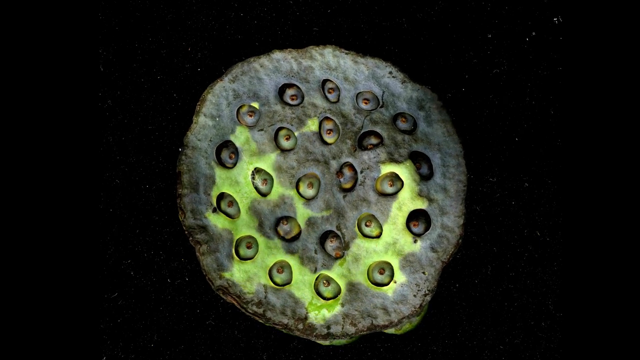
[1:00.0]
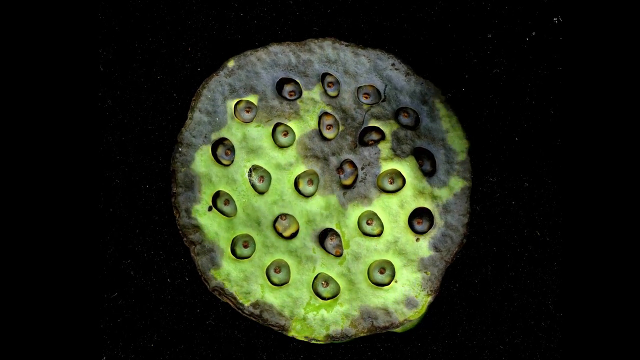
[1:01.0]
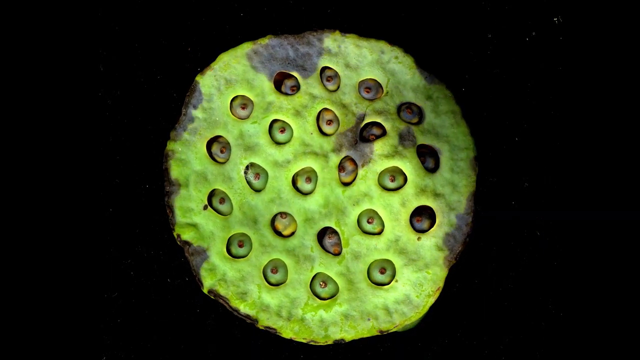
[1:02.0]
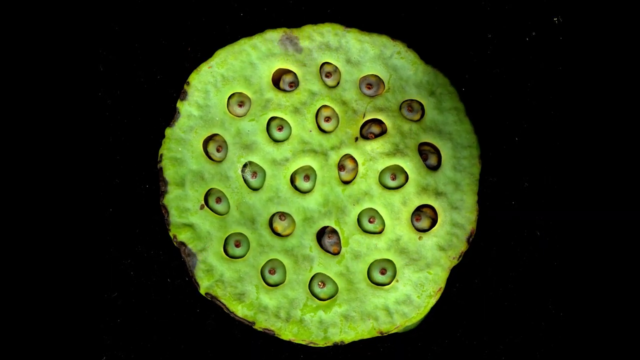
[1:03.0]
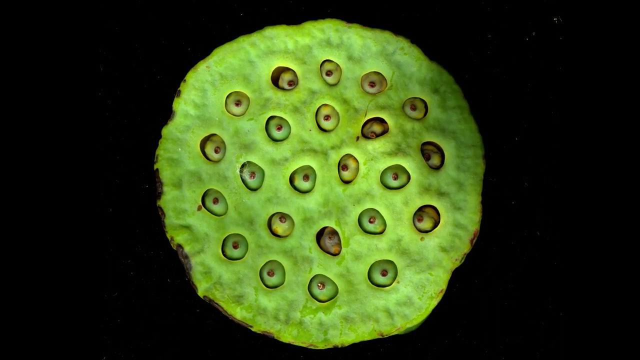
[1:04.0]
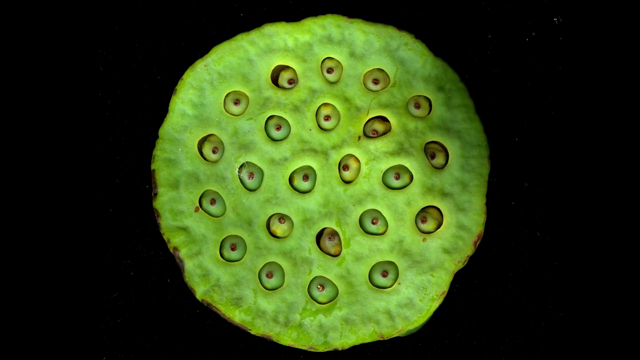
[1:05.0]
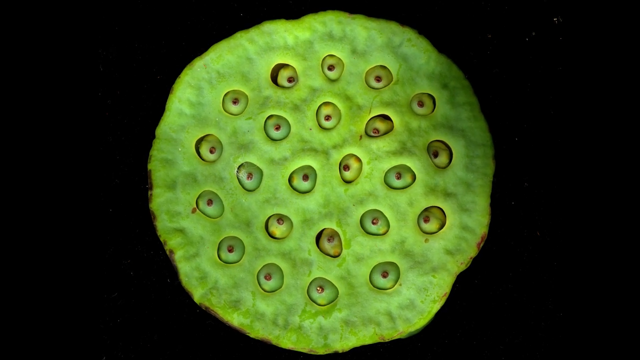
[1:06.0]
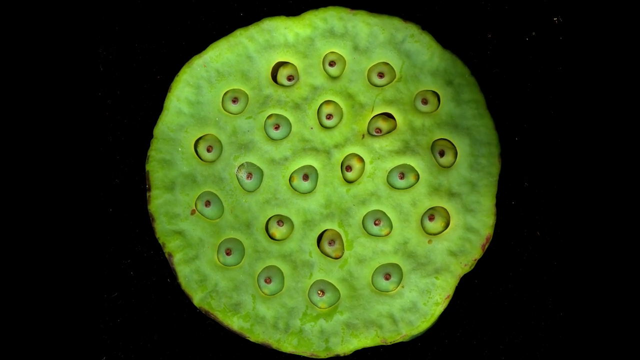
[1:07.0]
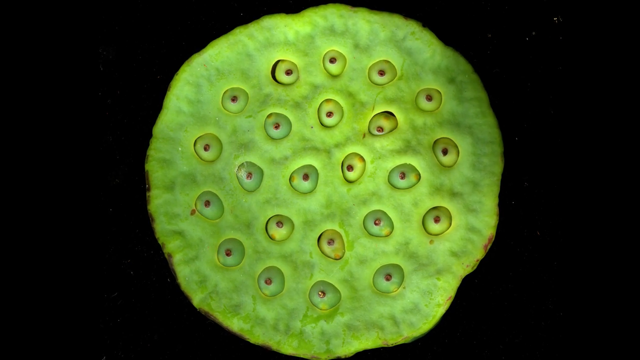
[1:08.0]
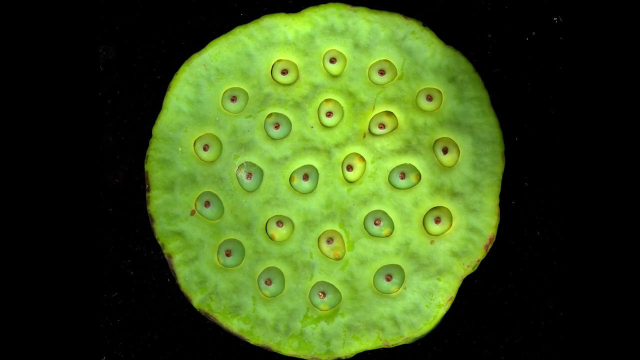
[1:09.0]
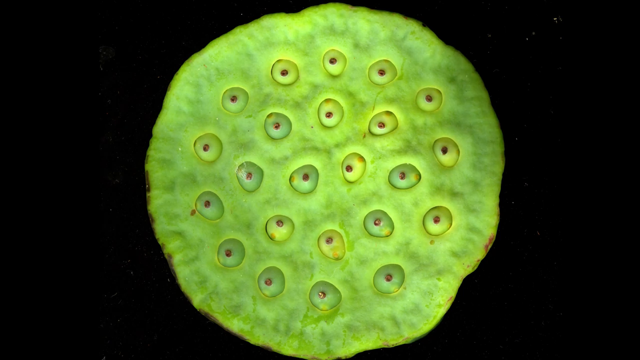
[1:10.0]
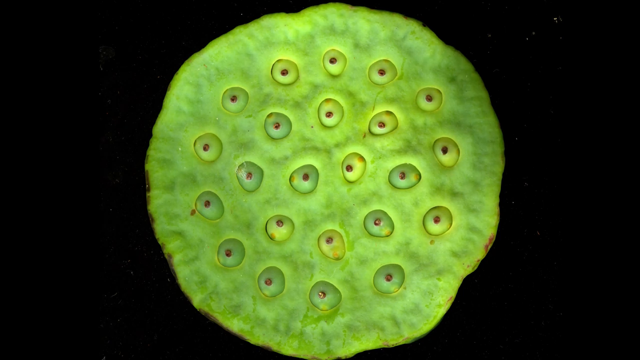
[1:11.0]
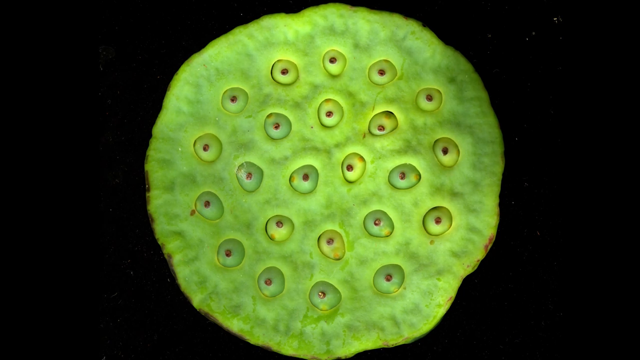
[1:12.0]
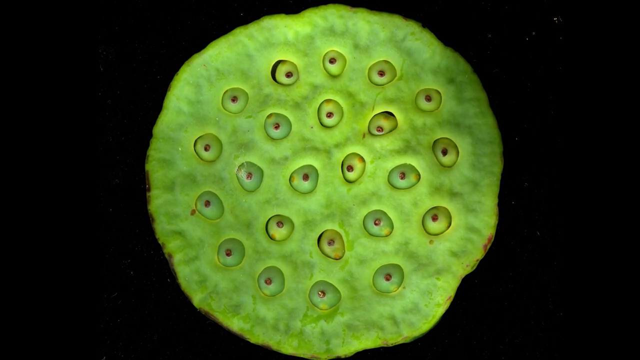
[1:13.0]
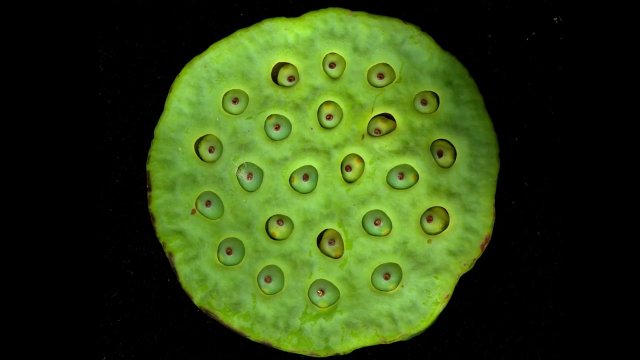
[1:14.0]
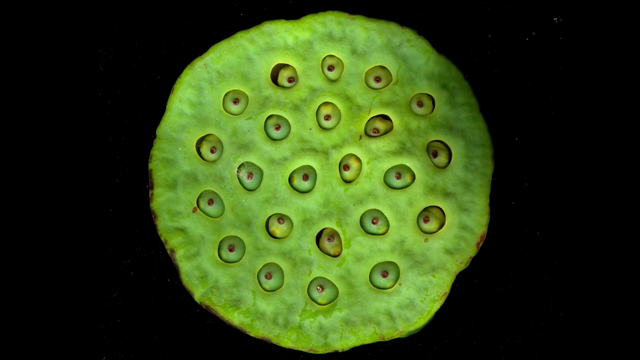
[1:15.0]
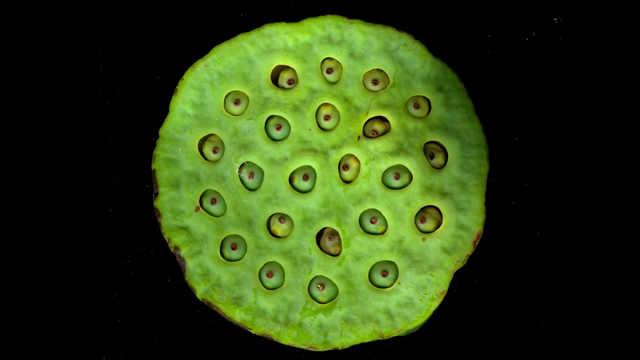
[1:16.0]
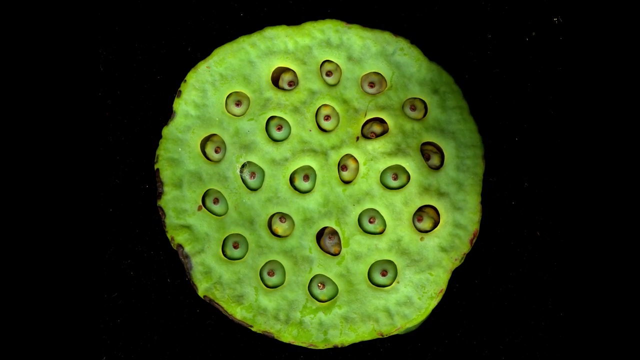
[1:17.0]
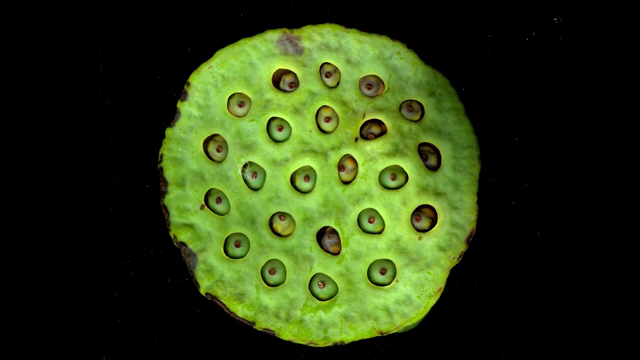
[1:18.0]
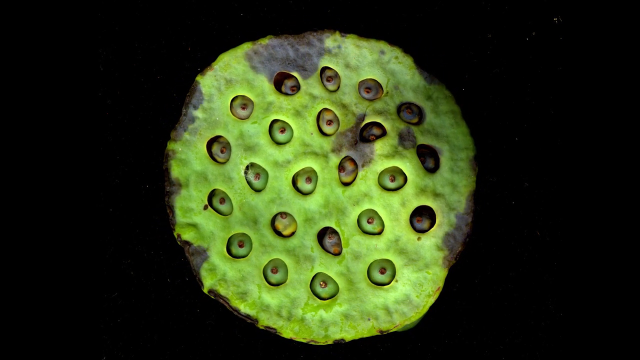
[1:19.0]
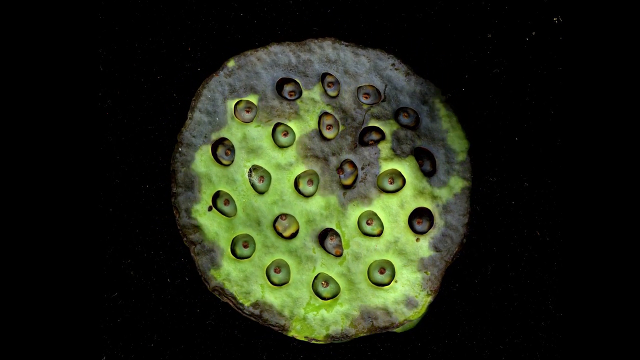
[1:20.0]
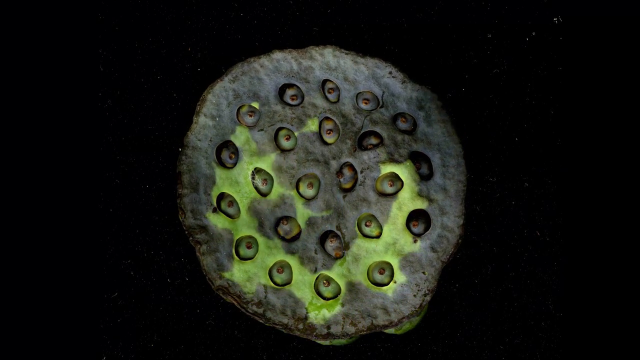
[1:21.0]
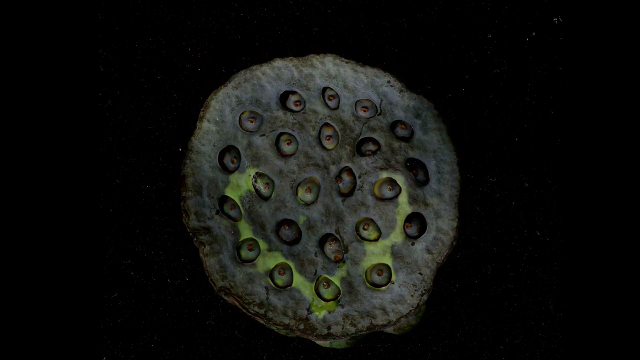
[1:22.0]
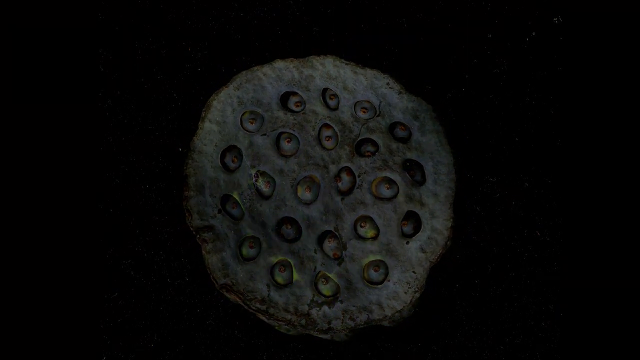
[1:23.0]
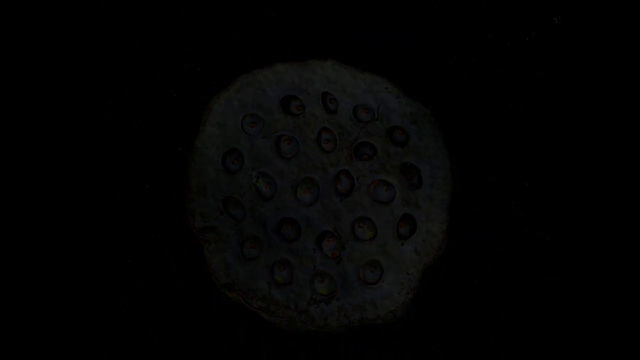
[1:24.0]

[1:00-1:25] A whole view of what is apparently a plant shows it at the point where it starts to turn green. Most of the surface is rough and black or grey, like stone, and the seed pods are all a sort of dark blue, dark grey, almost black colour. Around the bottom, in a shape almost like a smiley face, the surface starts to turn a sort of yellowy green. The green rapidly takes over the centre of the plant and then reaches the edges, and as it does, the surface of the plant becomes larger, flatter, less rough, more brightly coloured and more circular until it reaches its full extent. At that point the seed pods come up to the surface instead of being hidden in the holes, all sitting proud to the surface so that everything visibly fits together. Then the plant starts to die and fade, turning grey; the seeds disappear into the holes, the surface turns black, and the video fades away.